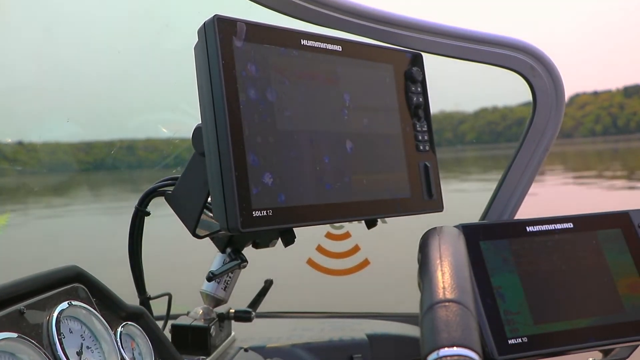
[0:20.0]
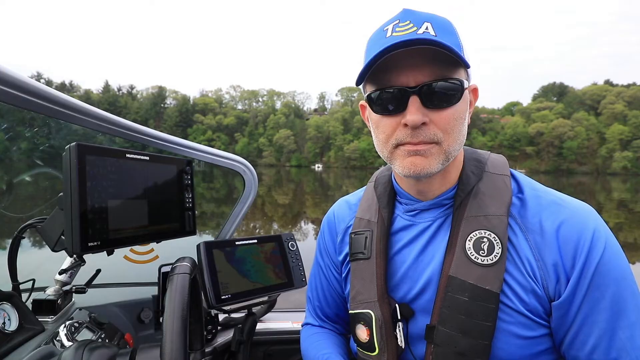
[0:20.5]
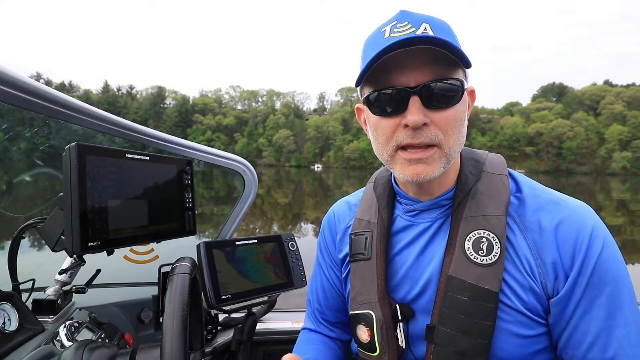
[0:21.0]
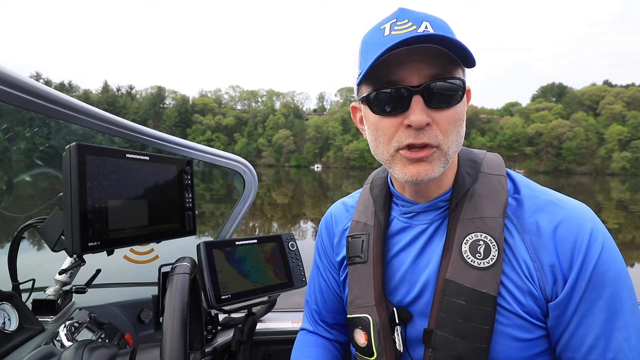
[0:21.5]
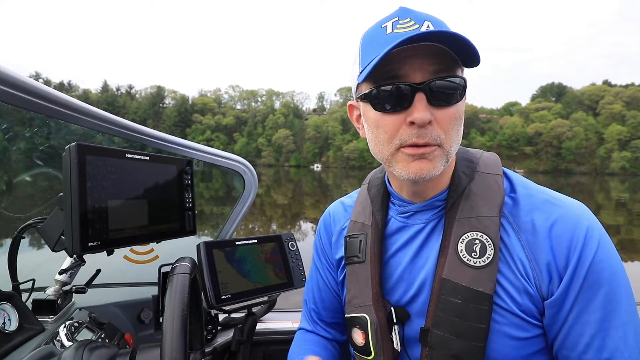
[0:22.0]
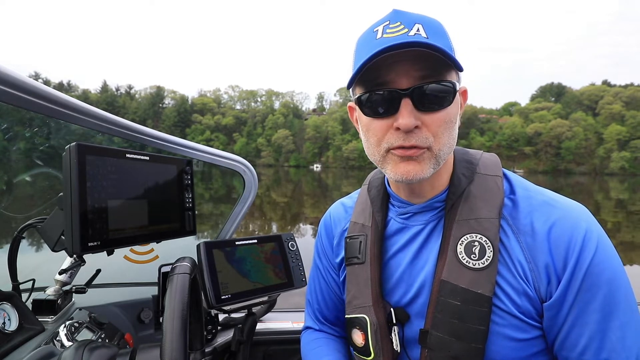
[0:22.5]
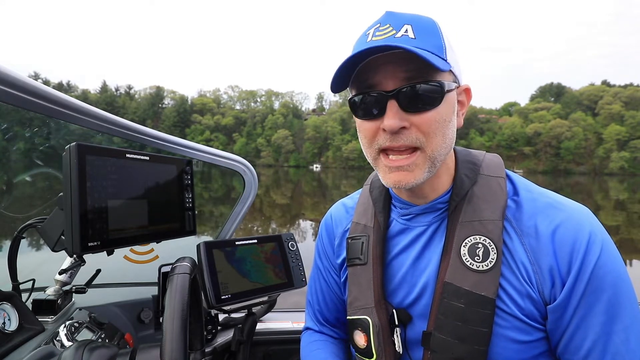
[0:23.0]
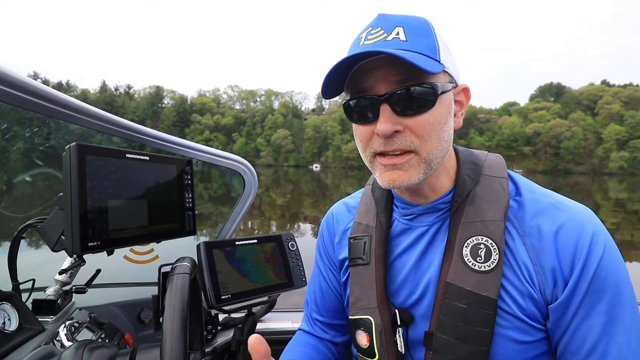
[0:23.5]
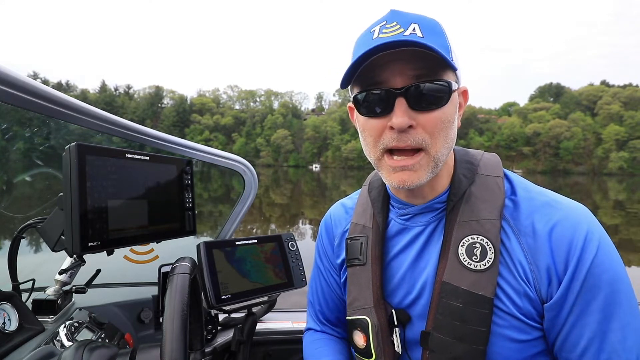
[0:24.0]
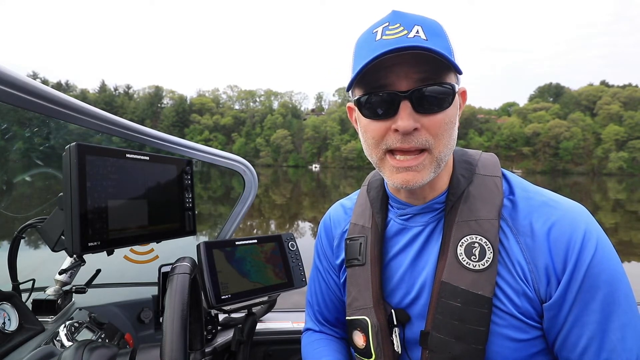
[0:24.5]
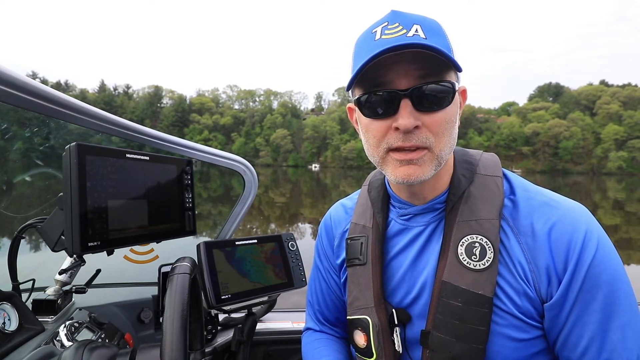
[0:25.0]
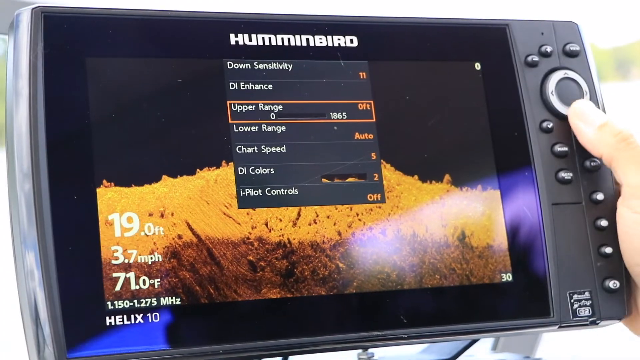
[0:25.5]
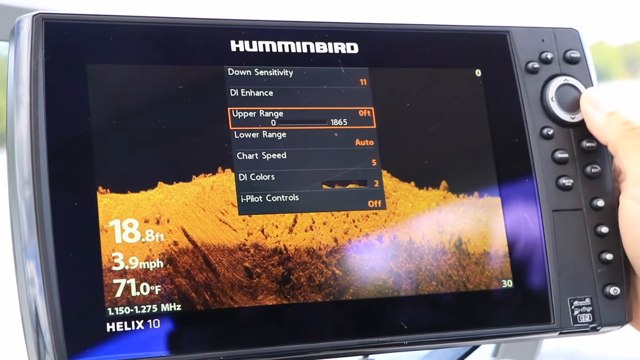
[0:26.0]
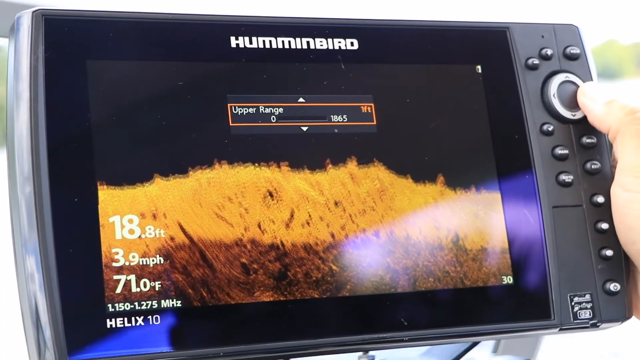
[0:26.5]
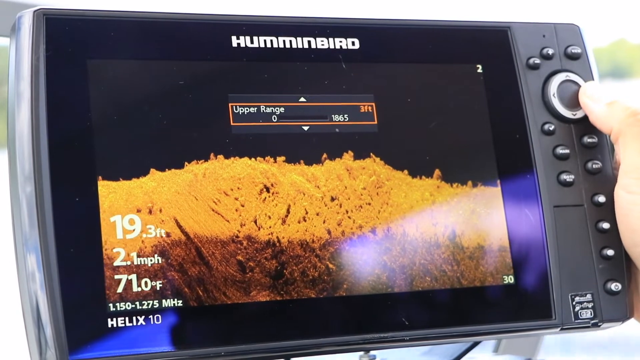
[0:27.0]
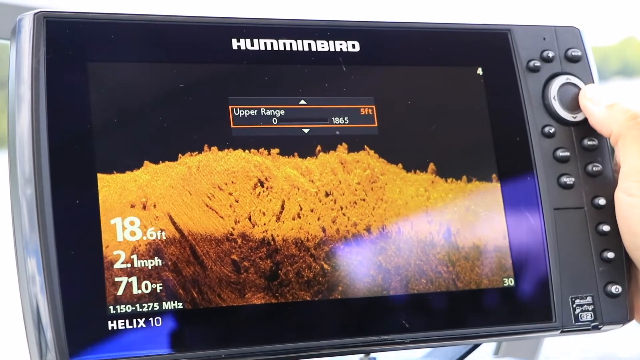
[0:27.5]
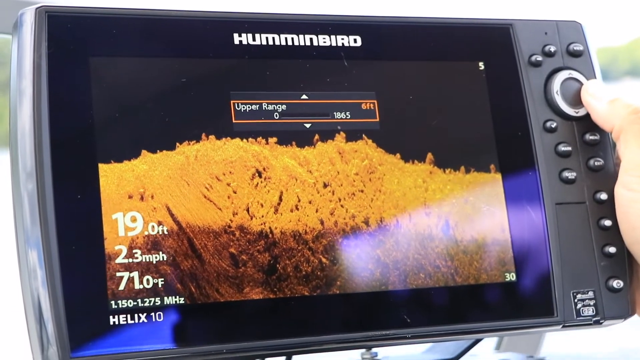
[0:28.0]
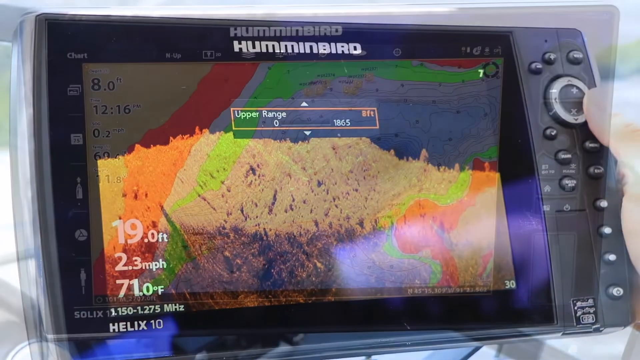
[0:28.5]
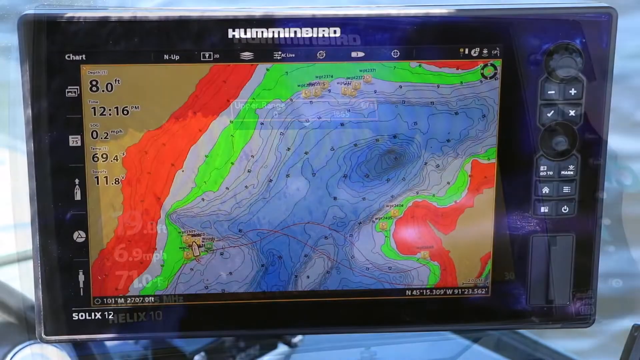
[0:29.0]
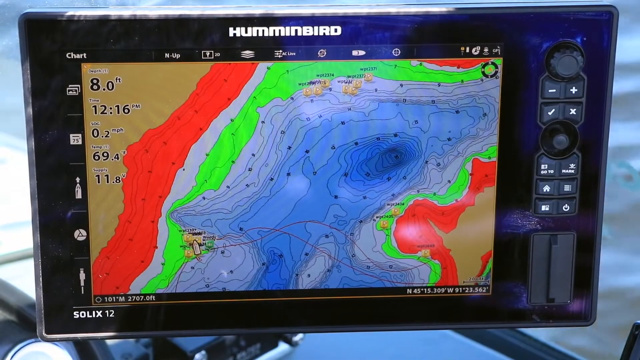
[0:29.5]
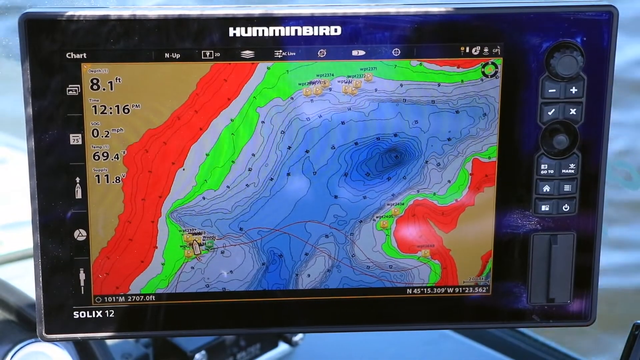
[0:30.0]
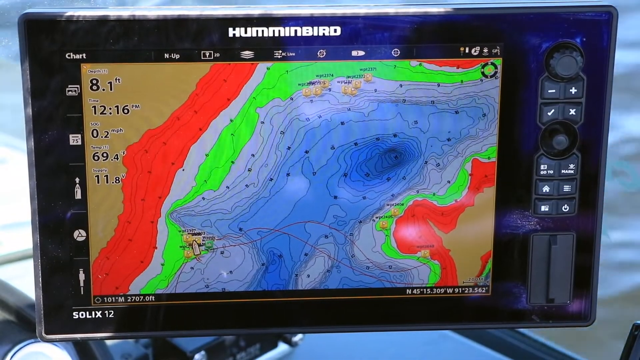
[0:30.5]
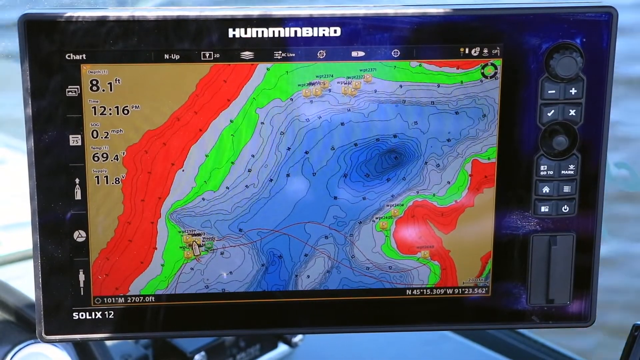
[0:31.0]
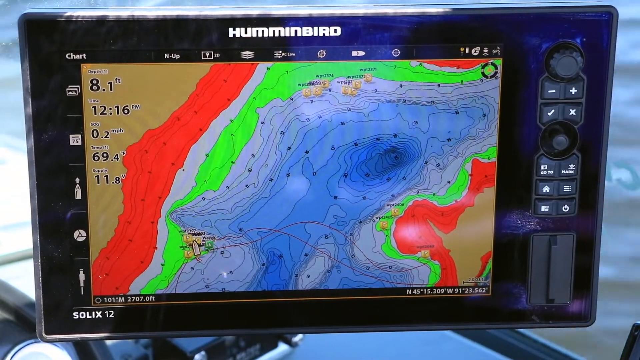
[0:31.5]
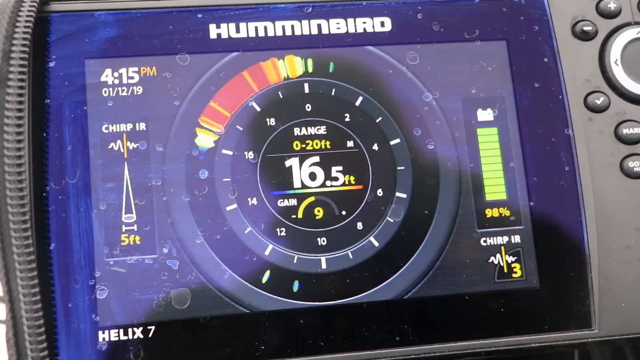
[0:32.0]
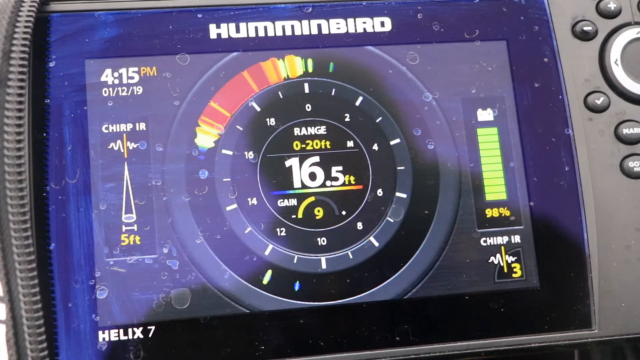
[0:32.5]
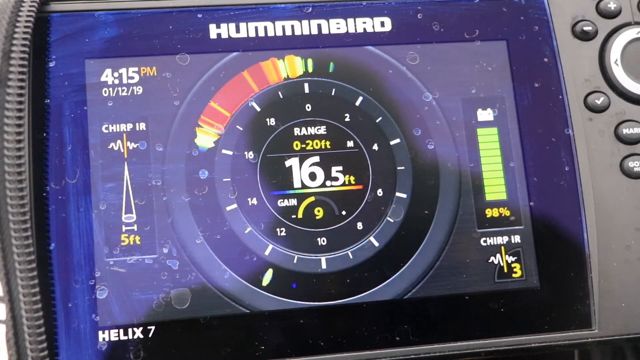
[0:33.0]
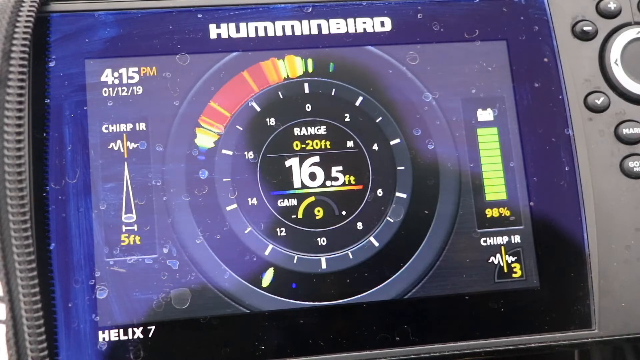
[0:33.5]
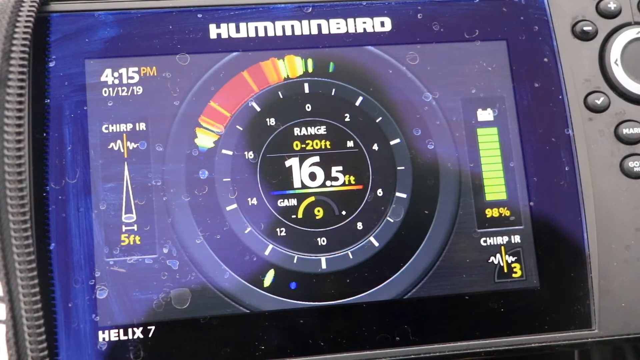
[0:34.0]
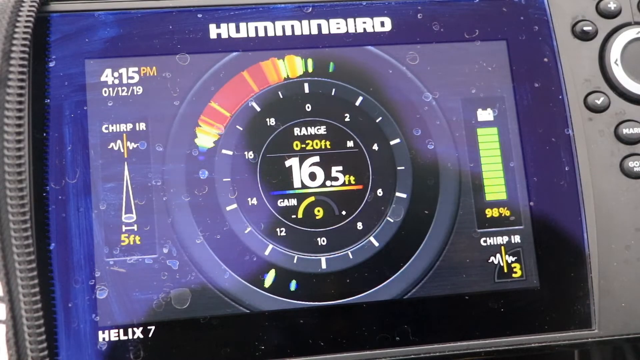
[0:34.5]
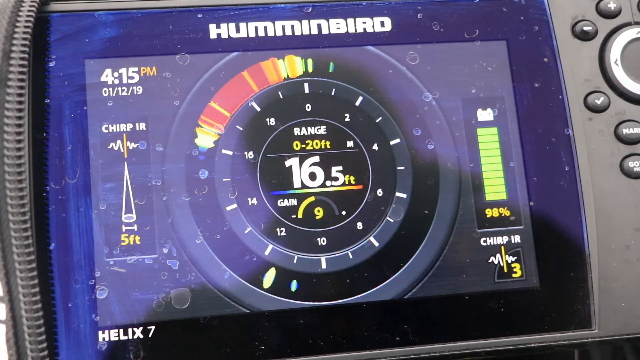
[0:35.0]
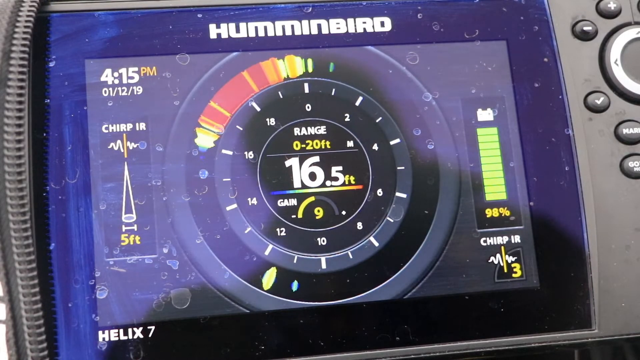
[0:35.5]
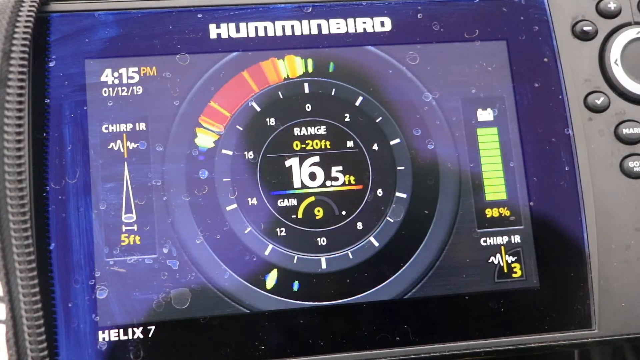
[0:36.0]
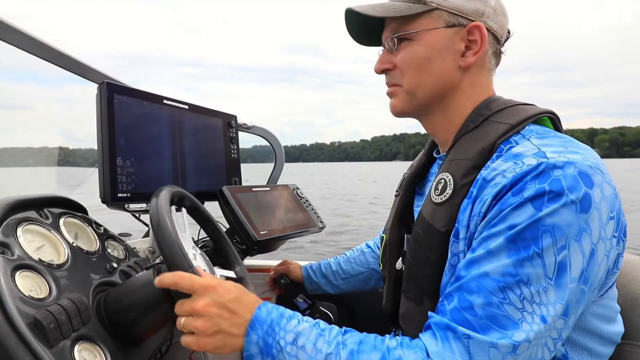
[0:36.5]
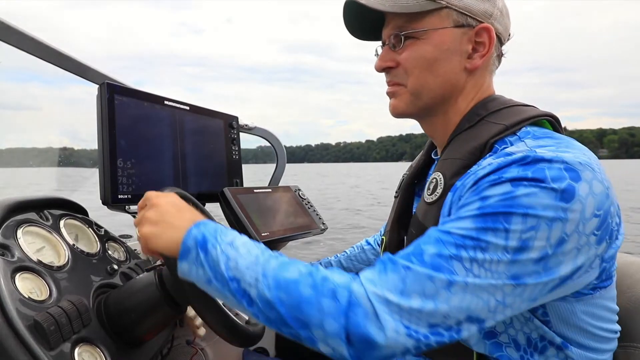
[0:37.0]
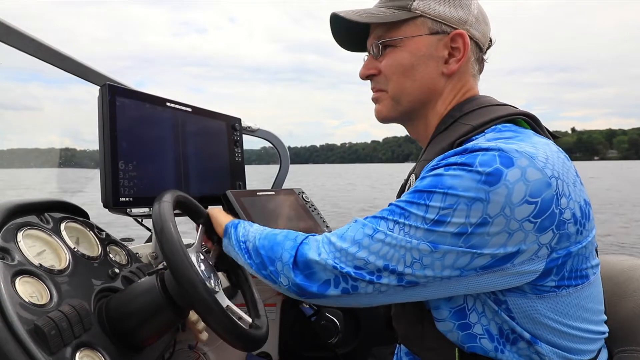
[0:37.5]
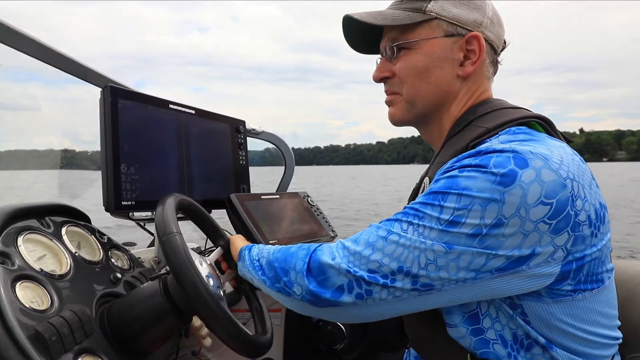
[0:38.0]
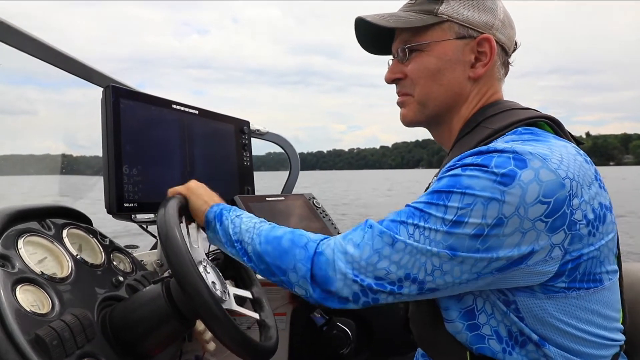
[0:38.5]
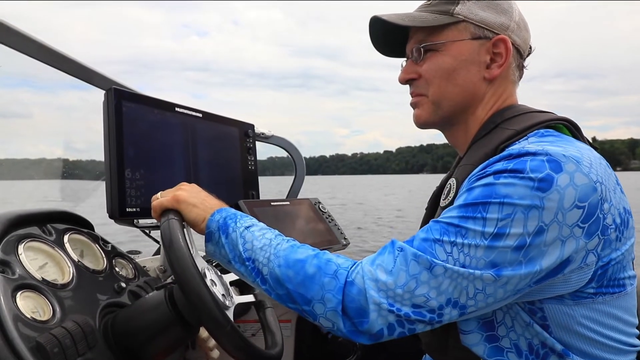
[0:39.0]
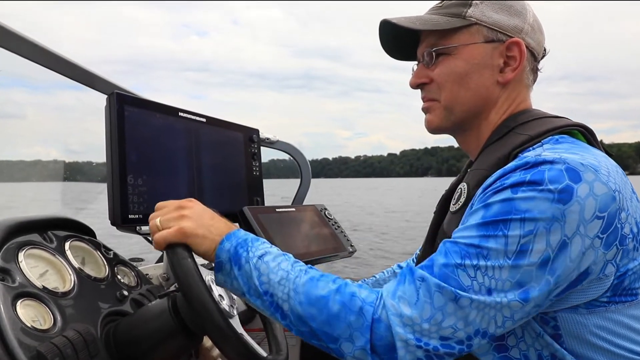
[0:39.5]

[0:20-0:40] A close-up shows one of the instrument panels, with gauges on the dashboard area at the bottom left, a display at the top center, and a display in the bottom right corner on the right side. Trees and the water of the lake are in the background. The video quickly cuts to a close-up of the man inside the boat, who is speaking; his right hand sort of briefly gestures up periodically from the bottom of the screen, with the thumb visible. Next, his right hand adjusts one of the dials on the top right corner of the Hummingbird display device. There appears to be a meter, sensor and map on the screen, and he is adjusting what appears to be the depth. The screen slowly fades to a map of the area in brown, red, green and blue, then transitions to a range screen, also on the Hummingbird display, with a meter currently at 16.5 feet.